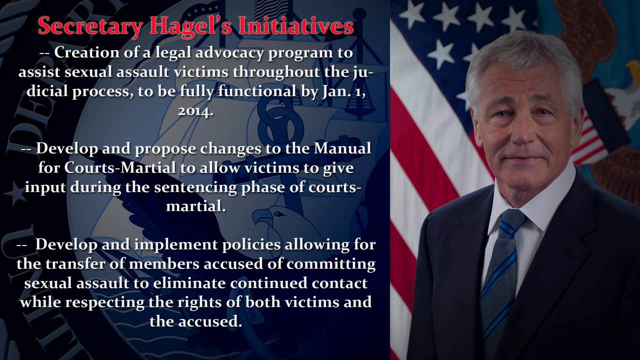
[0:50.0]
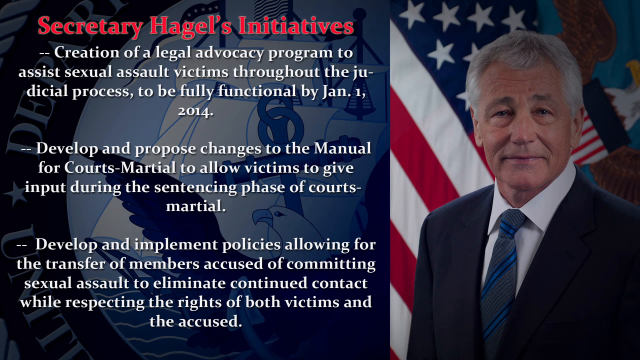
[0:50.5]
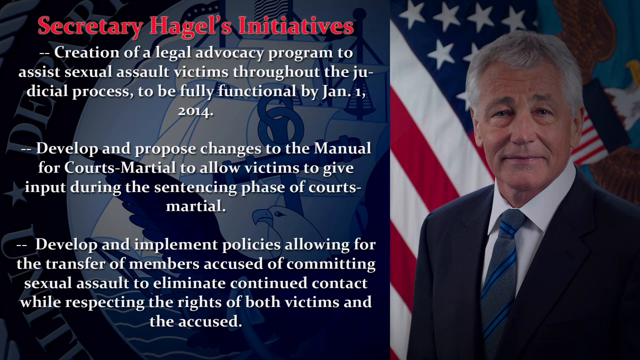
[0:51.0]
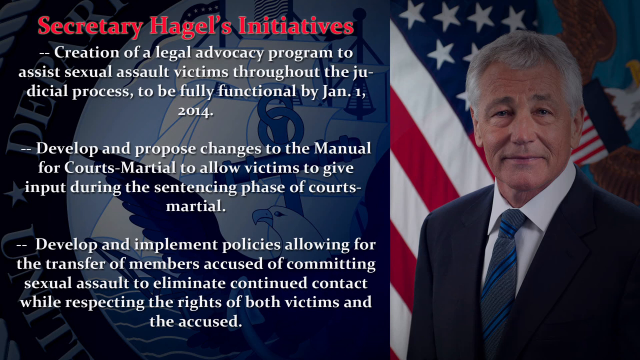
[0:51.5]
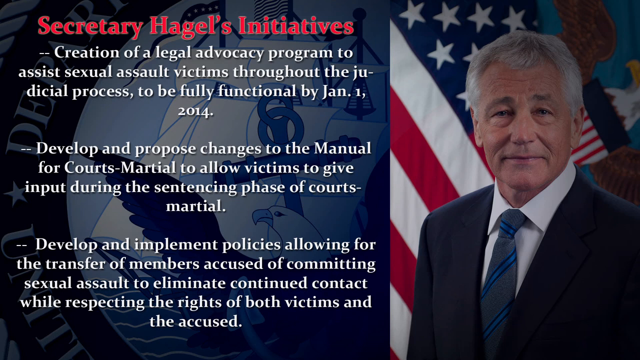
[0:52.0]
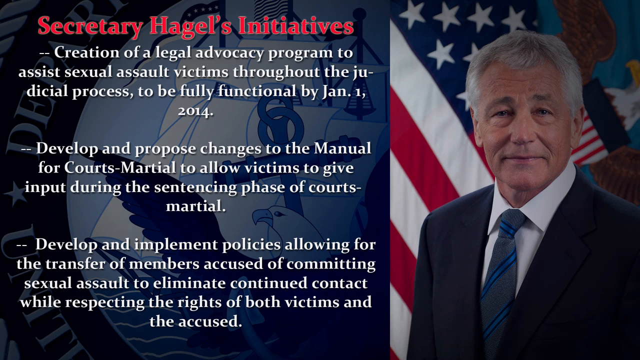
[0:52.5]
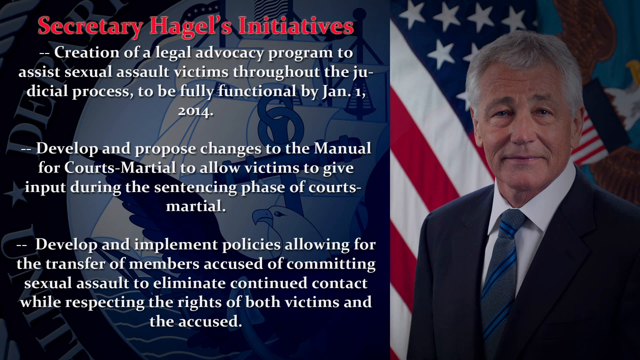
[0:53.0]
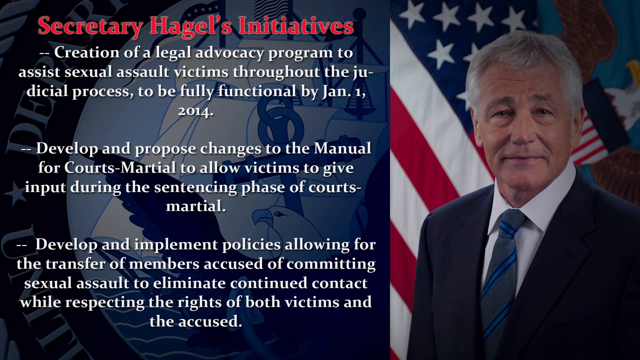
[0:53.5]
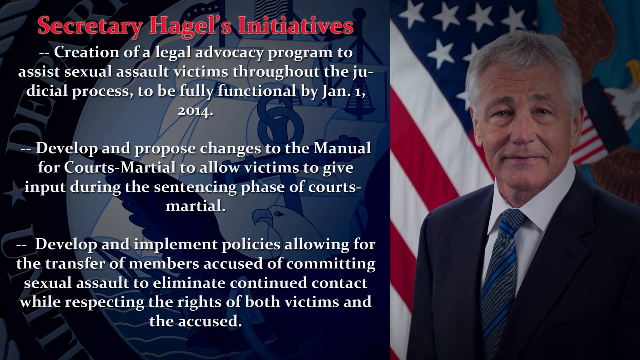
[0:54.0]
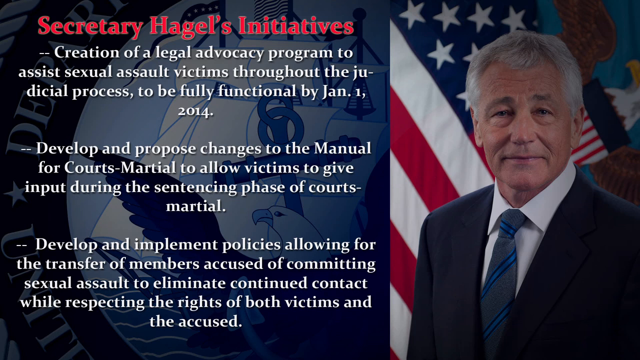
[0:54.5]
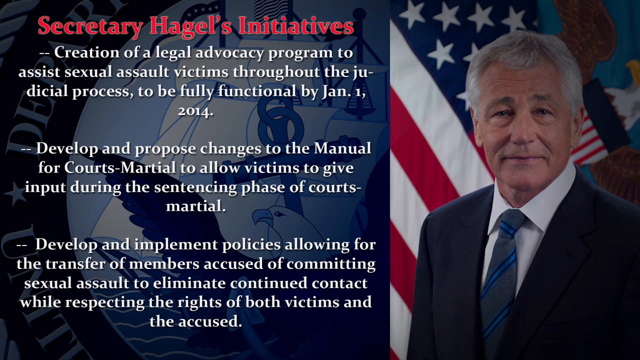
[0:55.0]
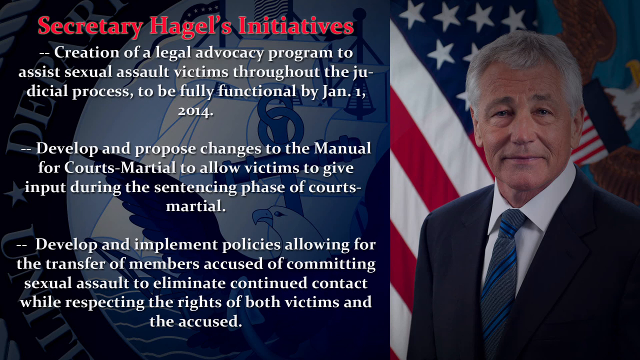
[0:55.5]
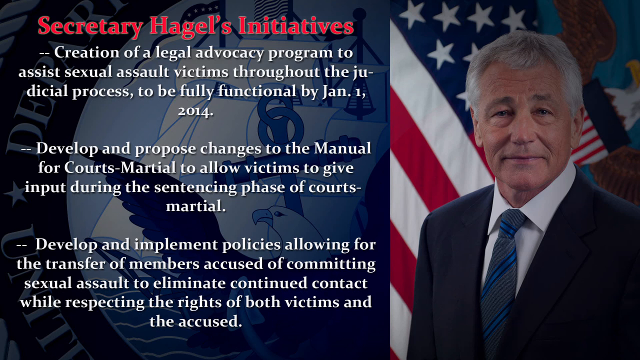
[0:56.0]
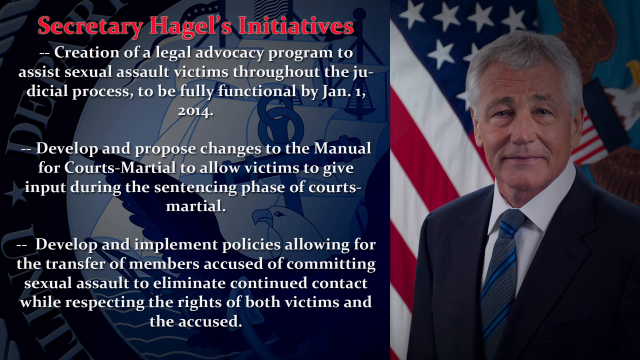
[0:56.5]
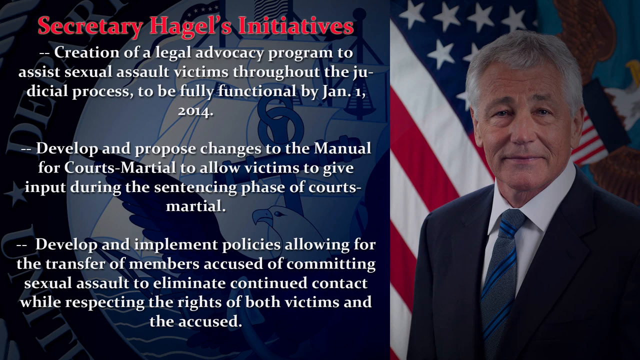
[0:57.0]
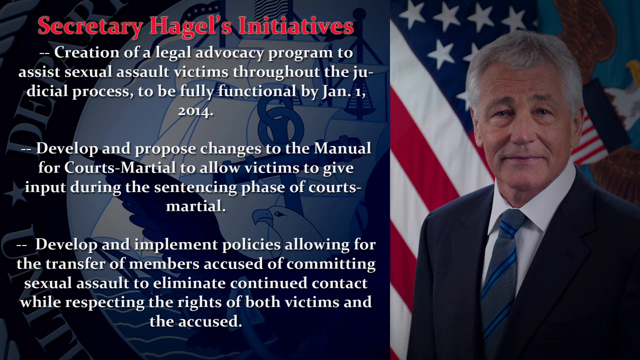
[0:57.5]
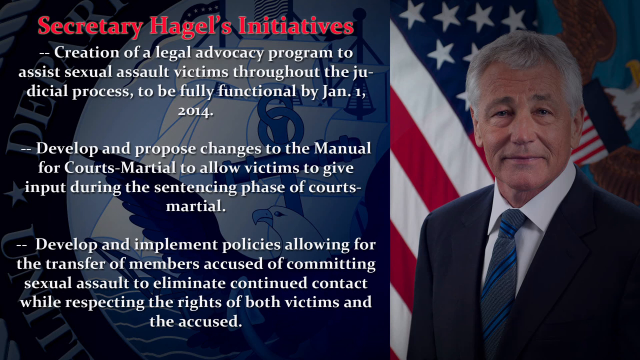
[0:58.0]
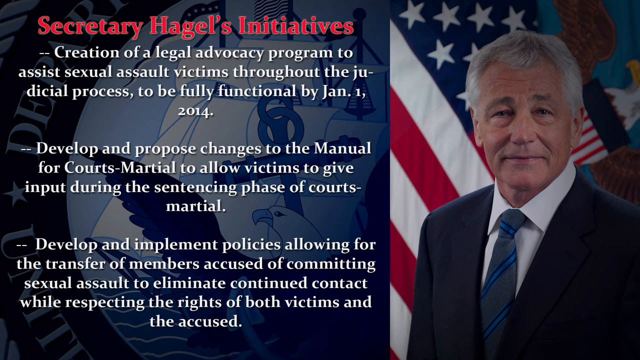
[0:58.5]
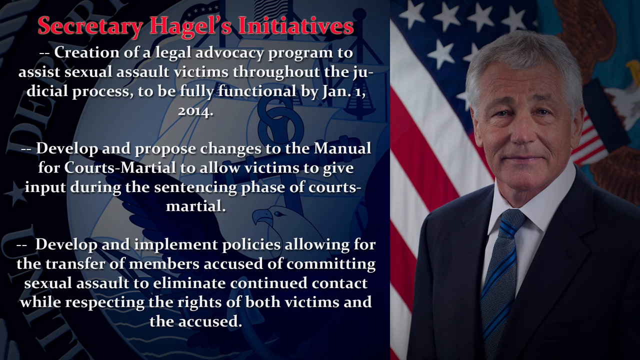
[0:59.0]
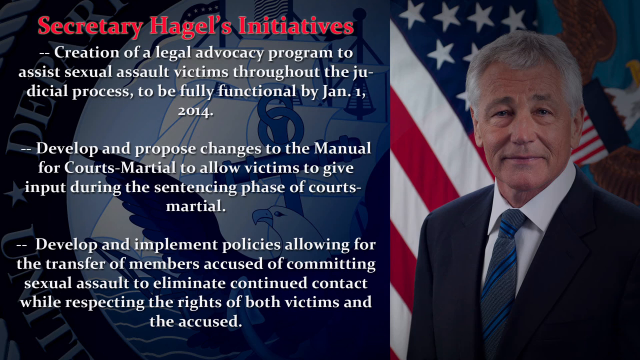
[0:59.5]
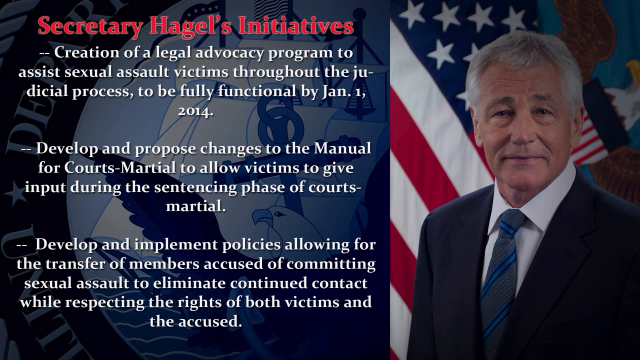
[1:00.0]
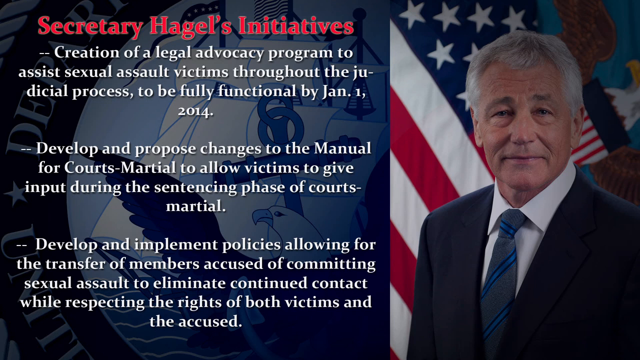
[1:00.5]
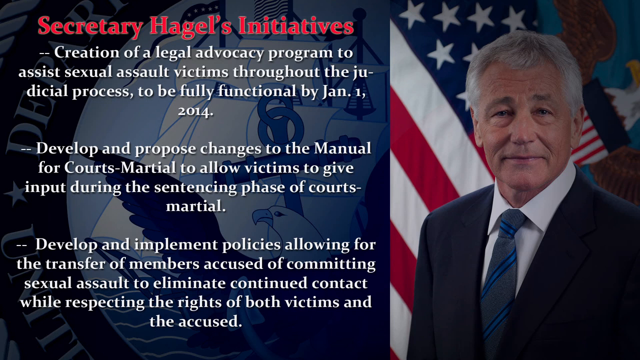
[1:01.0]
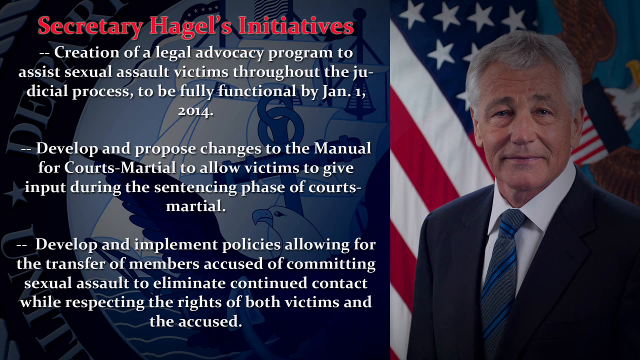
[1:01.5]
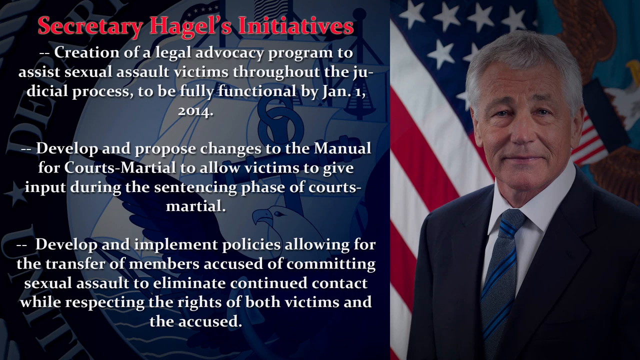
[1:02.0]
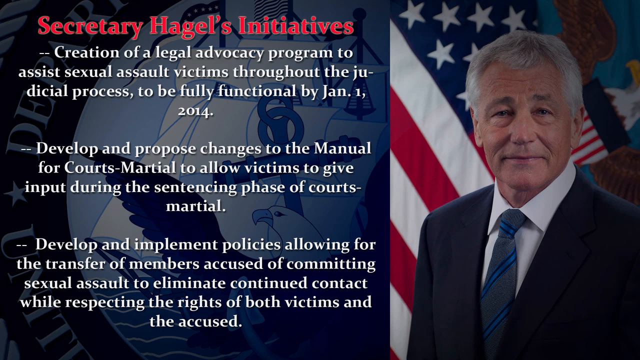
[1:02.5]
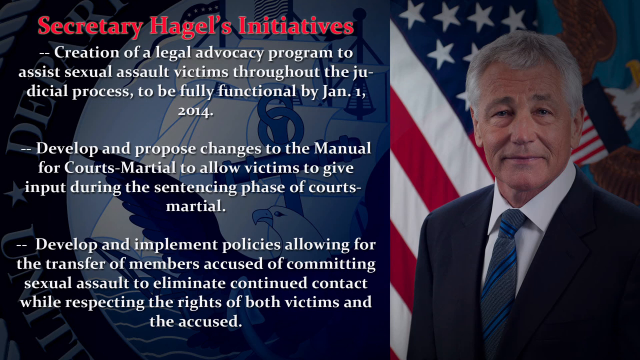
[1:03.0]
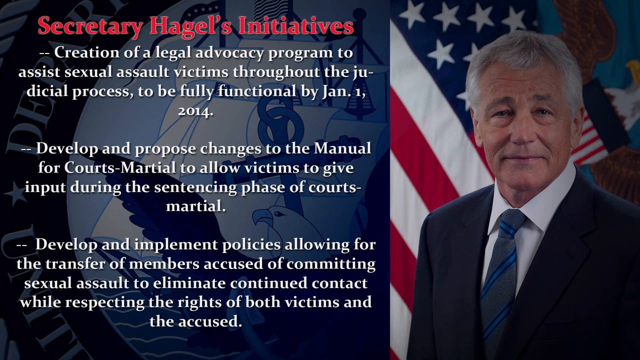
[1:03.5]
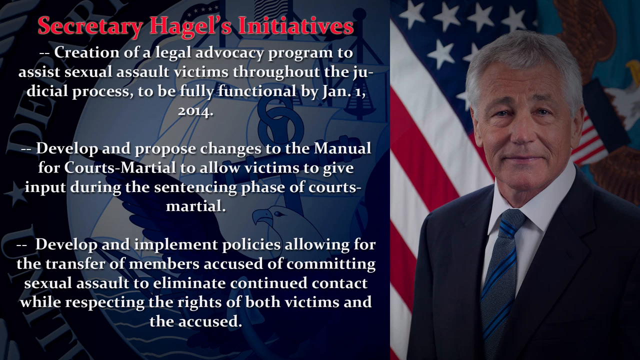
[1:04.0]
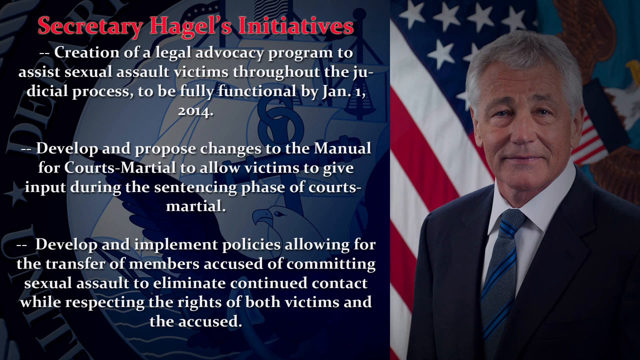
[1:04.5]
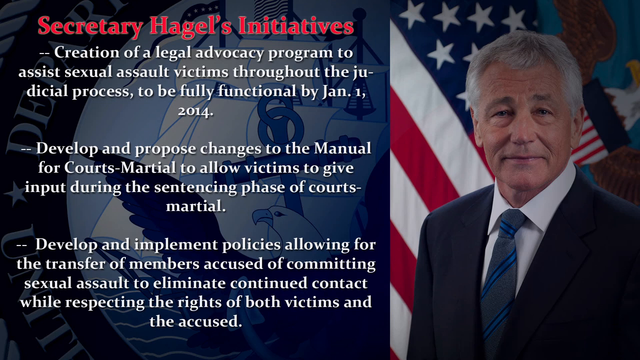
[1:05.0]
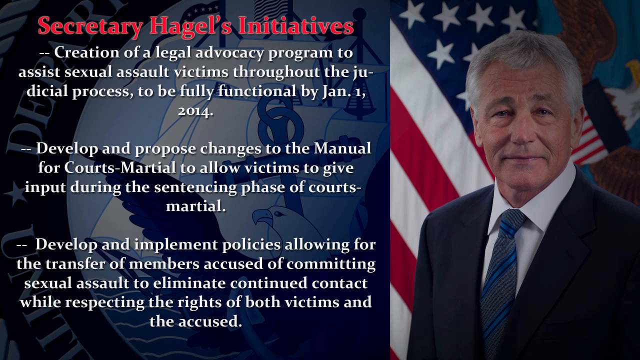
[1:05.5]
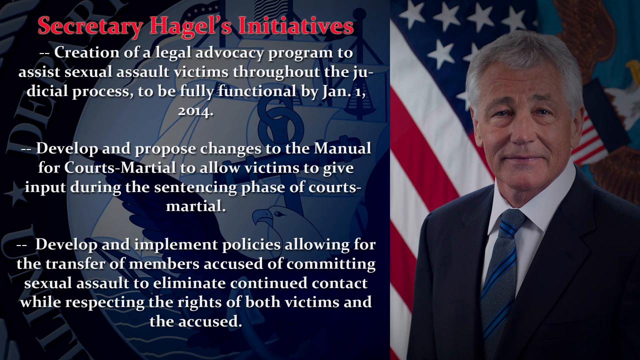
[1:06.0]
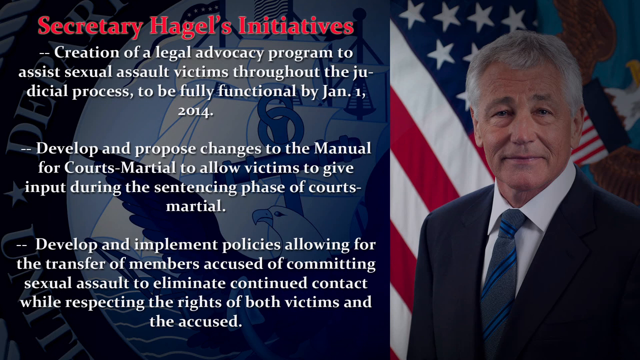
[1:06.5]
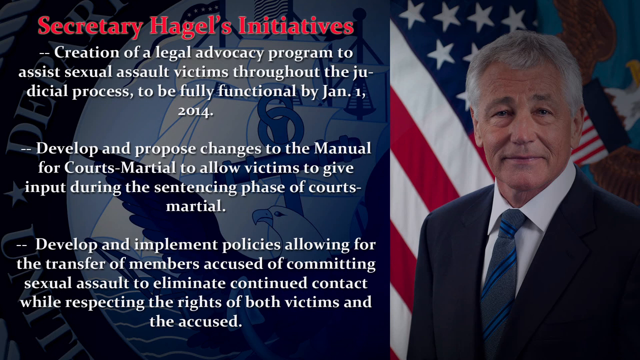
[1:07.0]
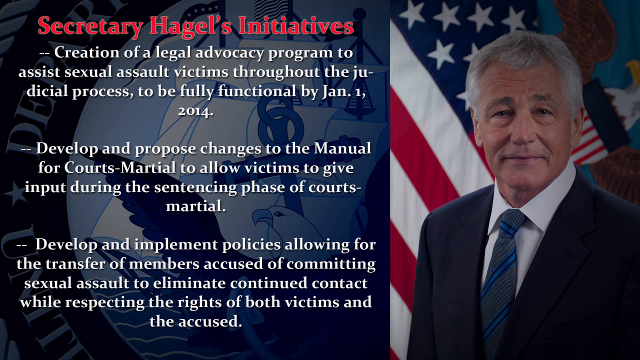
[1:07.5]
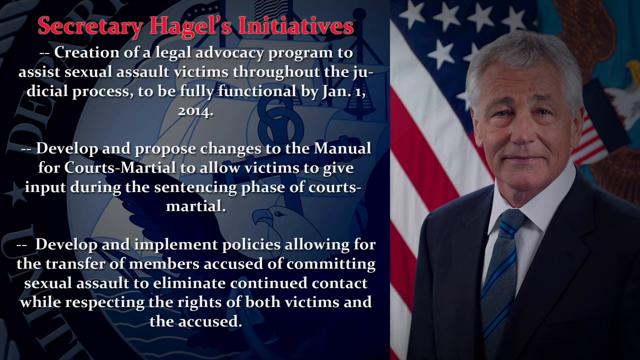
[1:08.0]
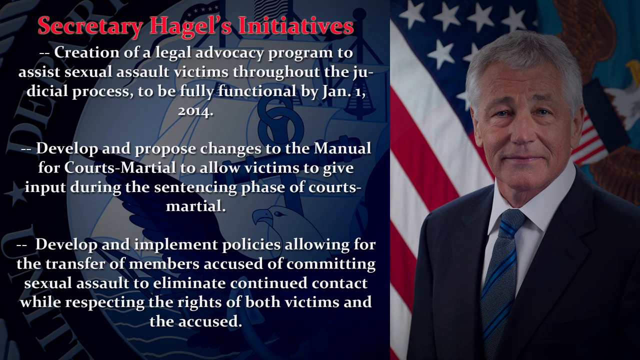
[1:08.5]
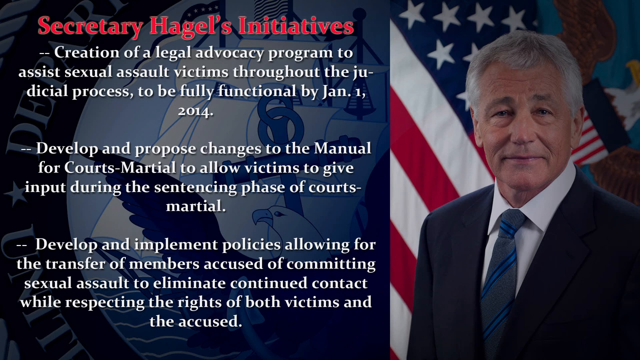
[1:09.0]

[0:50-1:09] Text of Secretary Hagel's initiatives lists: creation of a legal advocacy program to assist sexual assault victims throughout the judicial process, to be fully functional by January 1st, 2014; develop and propose changes to the manual for courts-martial to allow victims to give input during the sentencing phase of courts-martial; develop and implement policies allowing for the transfer of members accused of committing sexual assaults to eliminate continuous contact while respecting the rights of both victims and the accused. A man in a suit is on the right, with a back screen of an American flag with an American eagle. Later, the text is the only thing left. The text is on a blue background that has an eagle and some law-related symbols.